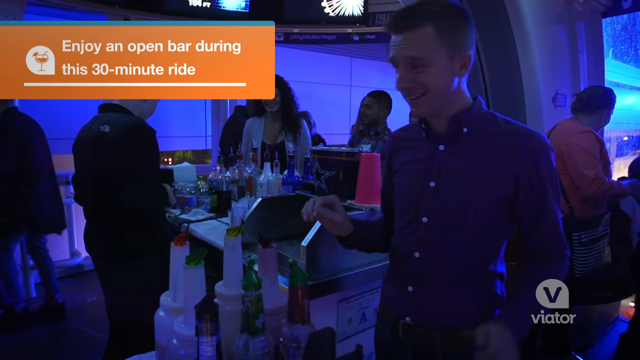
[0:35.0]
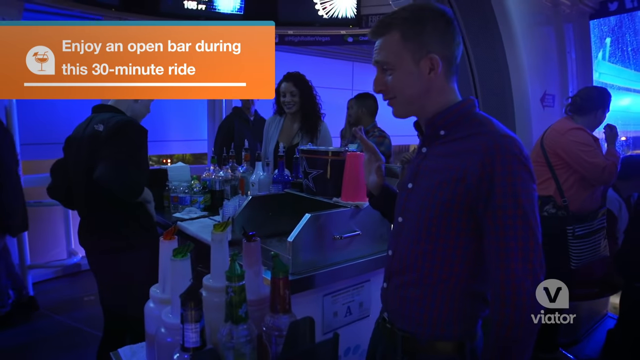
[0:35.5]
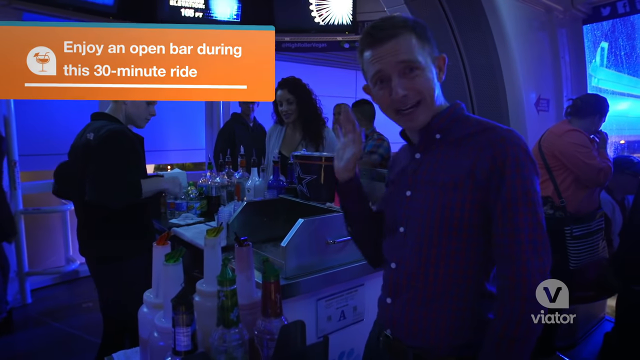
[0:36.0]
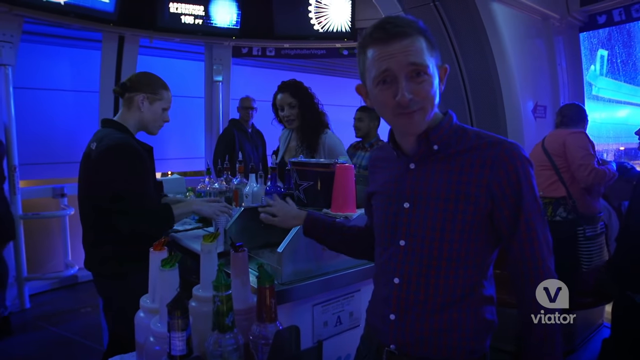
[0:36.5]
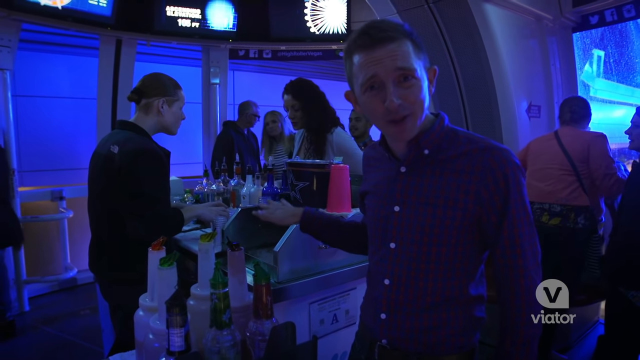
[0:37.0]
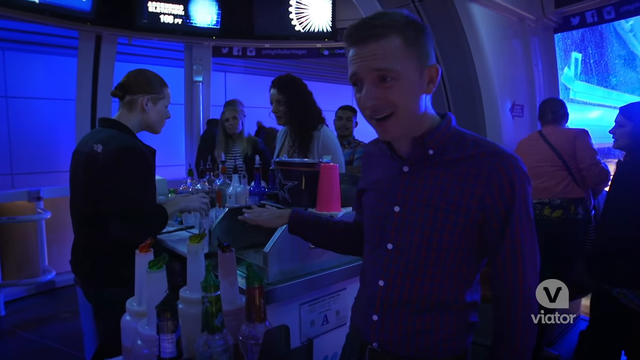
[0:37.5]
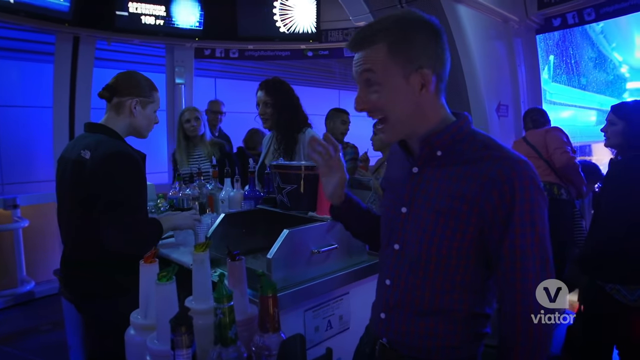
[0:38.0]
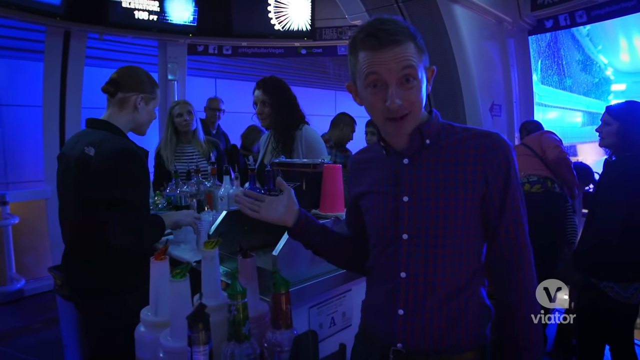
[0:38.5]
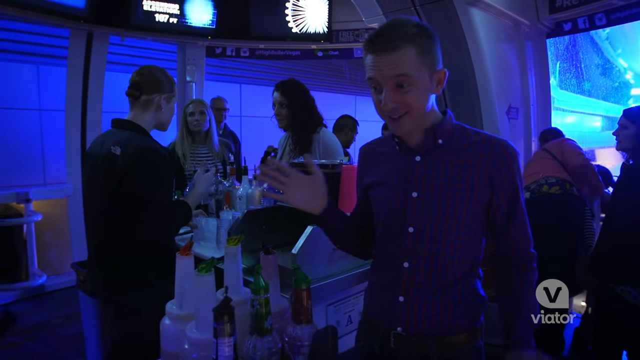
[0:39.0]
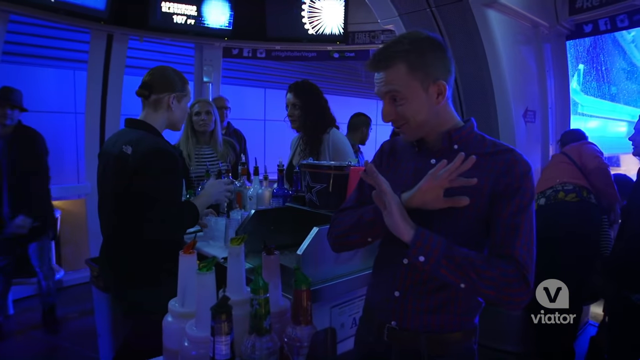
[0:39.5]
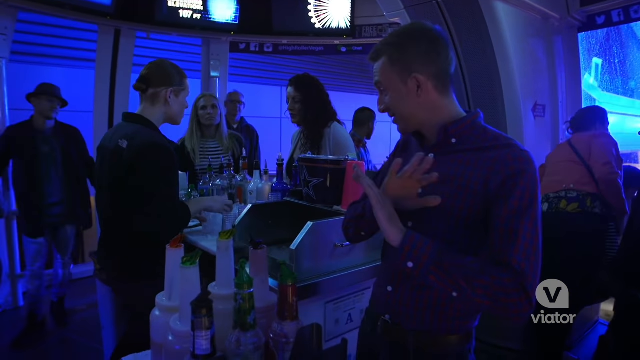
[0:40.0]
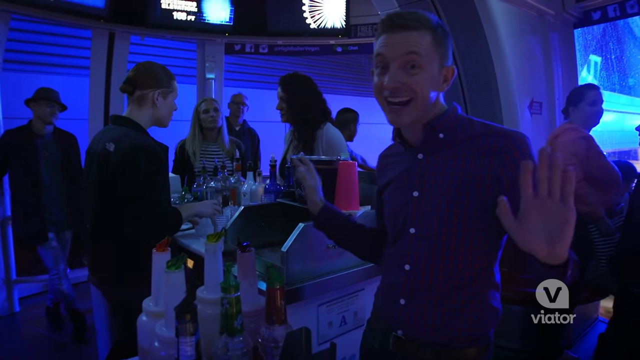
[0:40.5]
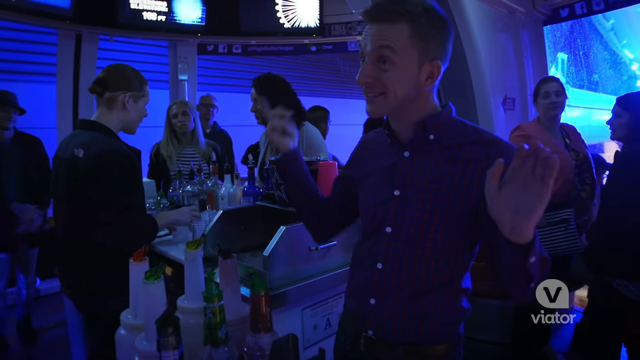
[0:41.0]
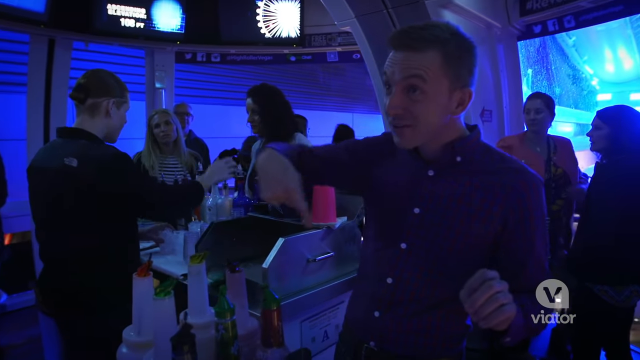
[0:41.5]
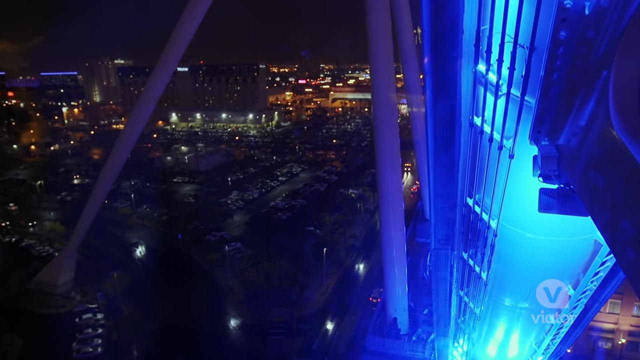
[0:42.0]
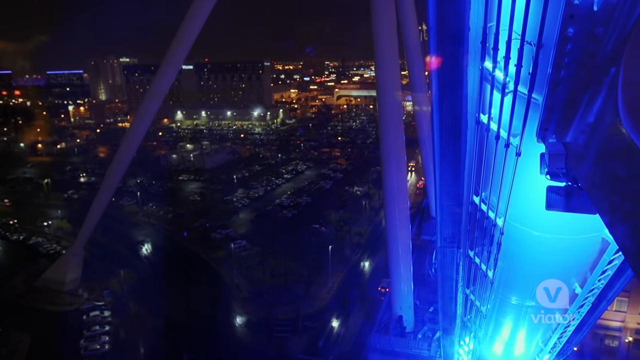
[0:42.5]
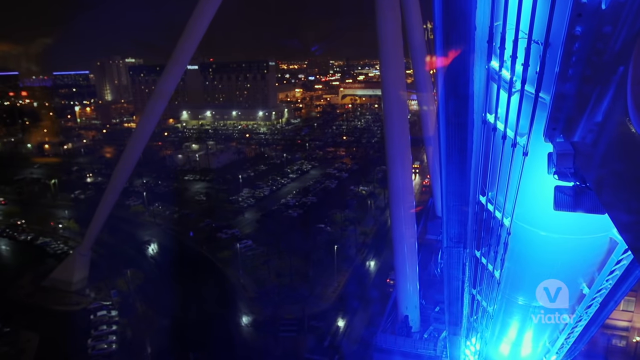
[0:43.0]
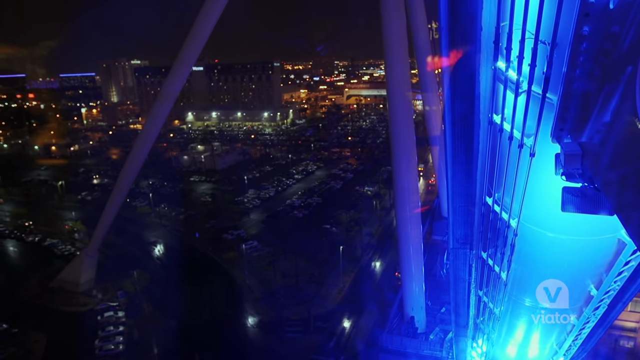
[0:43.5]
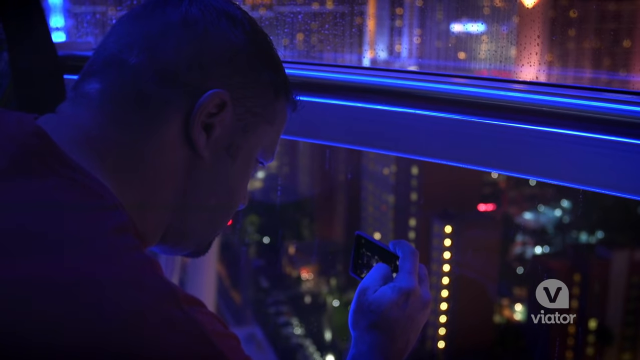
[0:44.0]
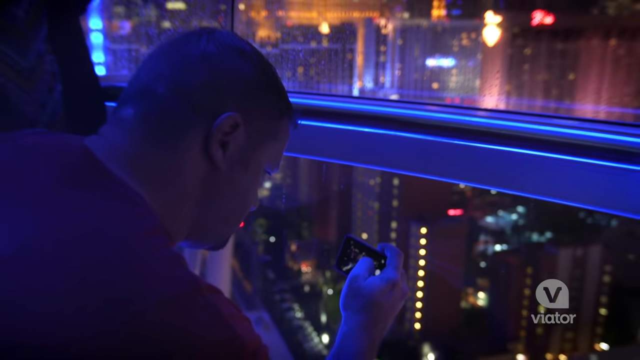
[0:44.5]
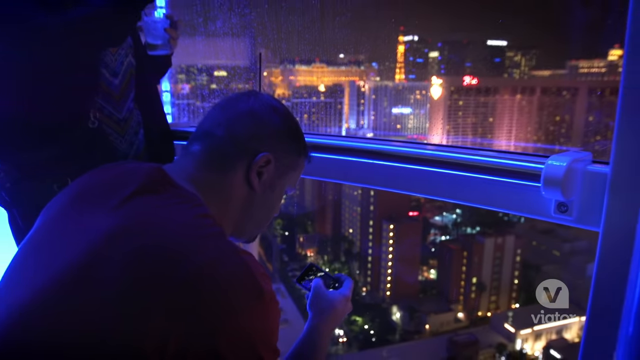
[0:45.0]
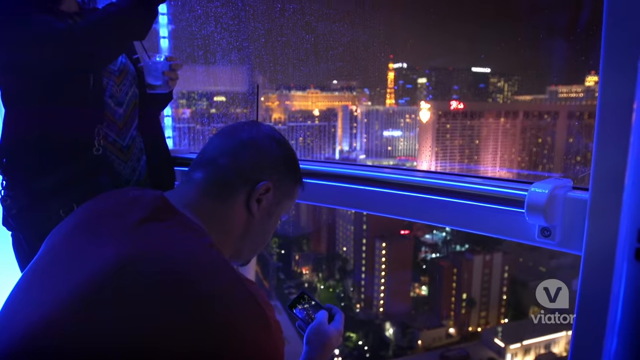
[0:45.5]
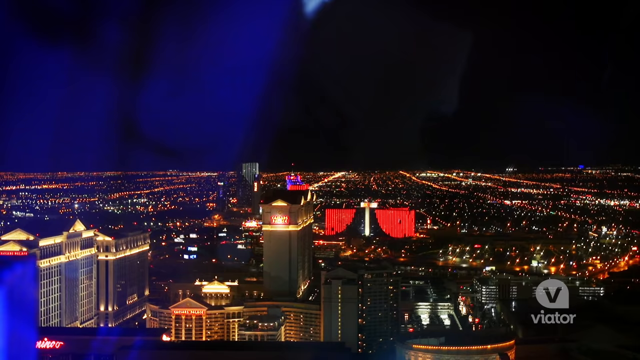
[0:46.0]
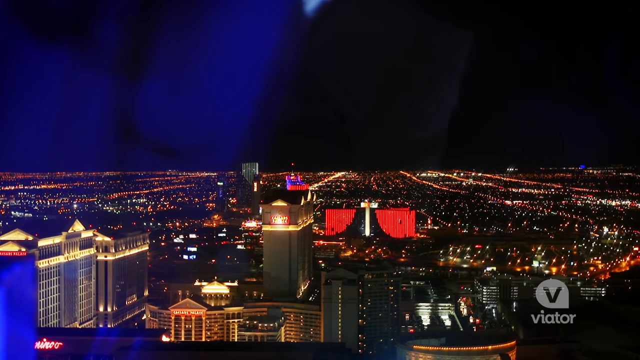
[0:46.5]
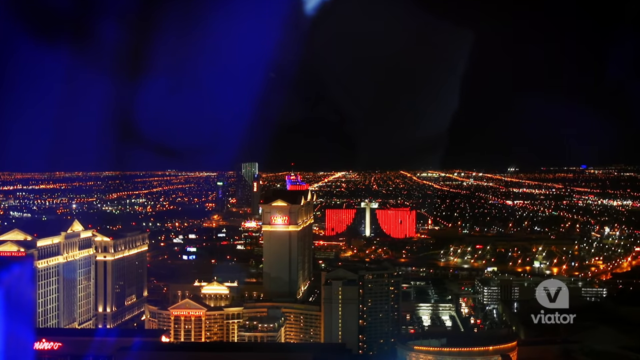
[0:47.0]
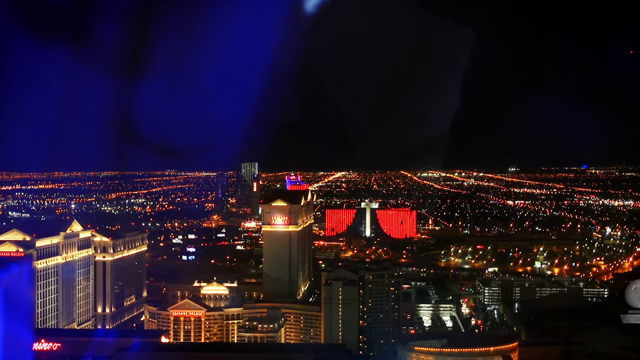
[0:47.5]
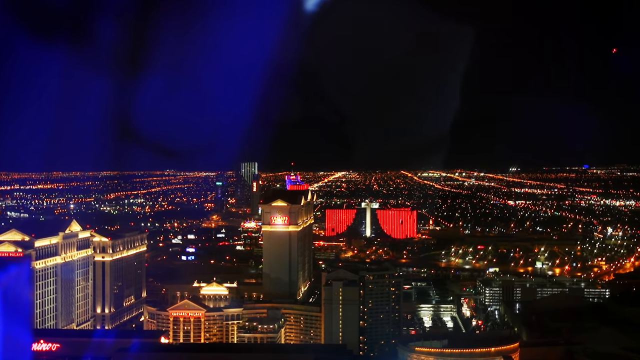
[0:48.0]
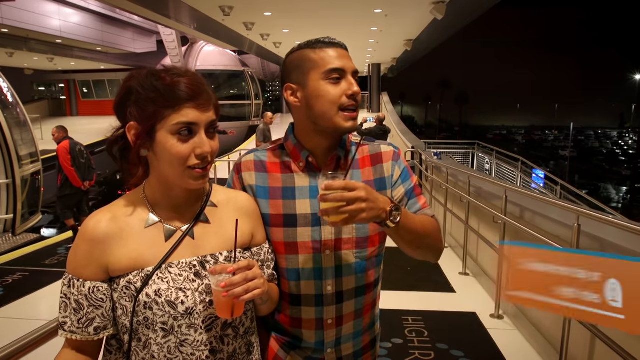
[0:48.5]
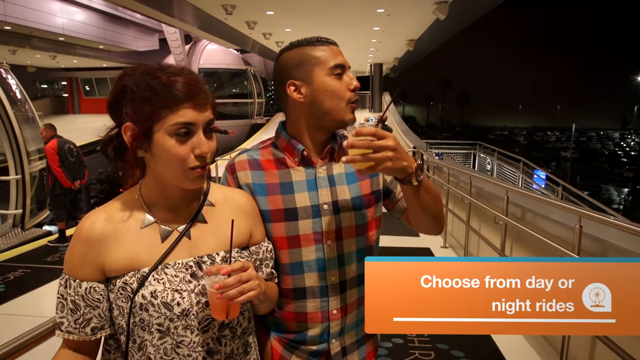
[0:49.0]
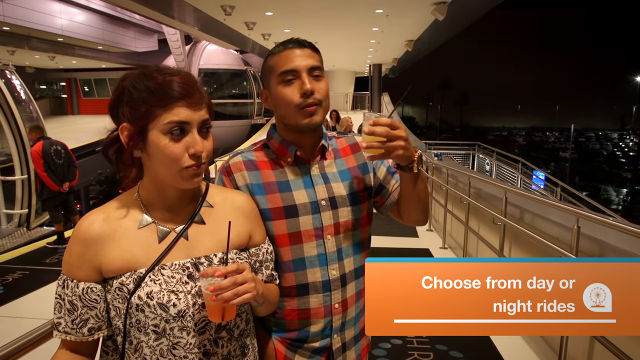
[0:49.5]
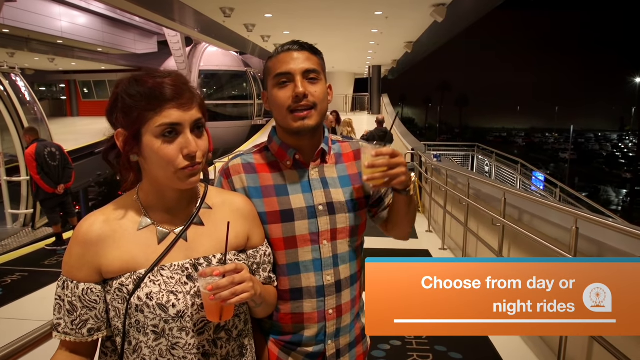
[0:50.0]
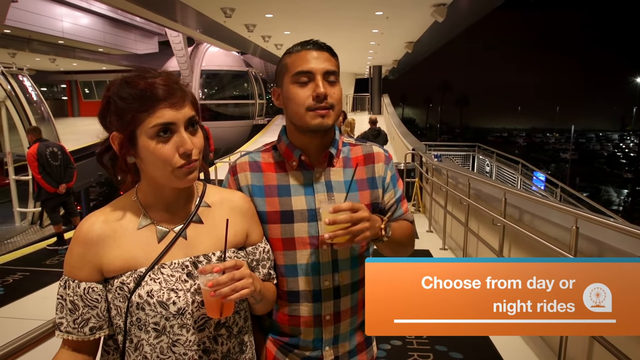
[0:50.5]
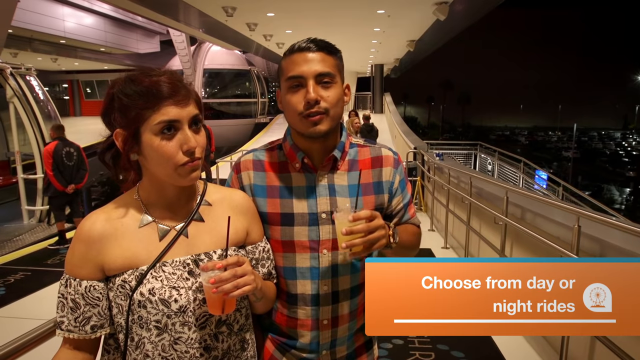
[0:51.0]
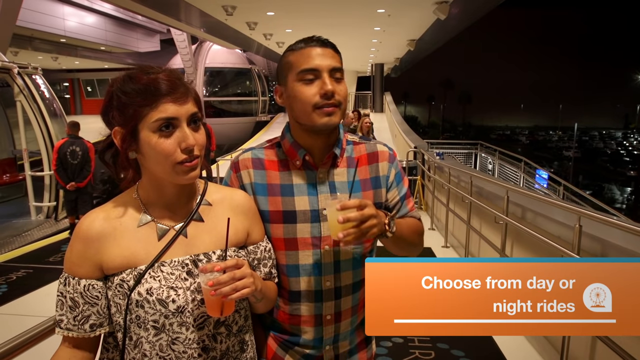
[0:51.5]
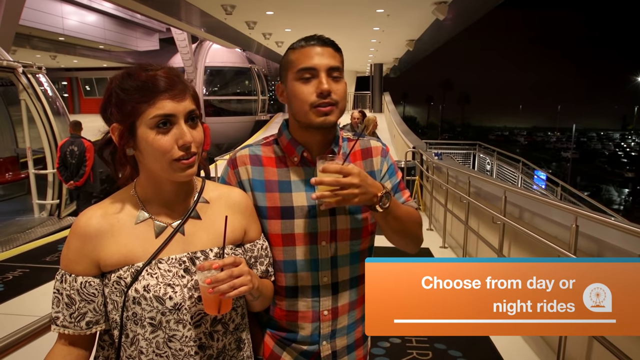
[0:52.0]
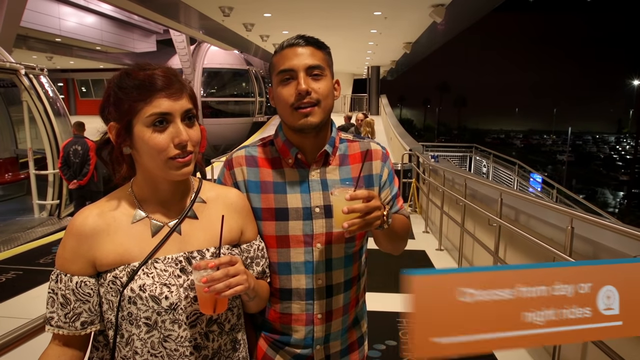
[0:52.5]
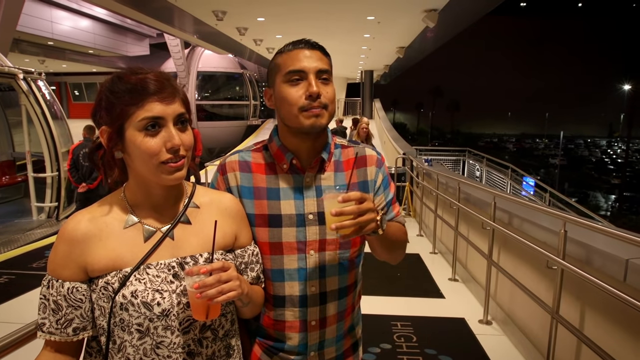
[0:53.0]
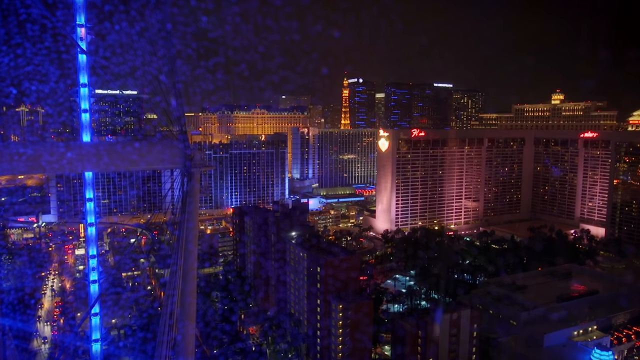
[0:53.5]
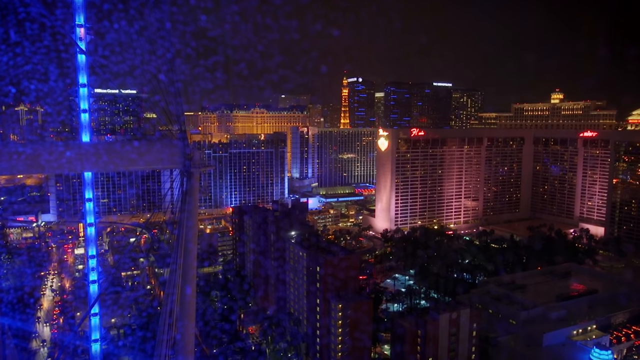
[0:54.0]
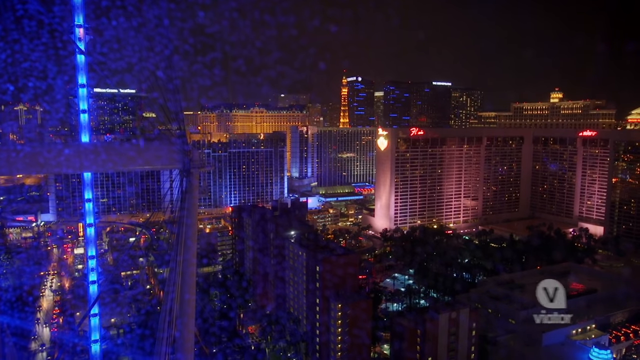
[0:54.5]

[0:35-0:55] The man in the gingham shirt gestures to the bartender behind him and to his right, where drinks are being mixed at a bar. People stand, order and take their drinks, and the man seems very happy, his gestures very wild. The base of the whole structure appears, lit up in blue light. The view then pans across the city: it is very black outside, but the city lights are neon and bright. A young man and a young woman, dressed up for the evening, each hold a drink in their left hand. He wears a checked shirt; her outfit has no sleeves on the shoulders but does extend to her arms. Behind them is what must be the high roller, the orb-like ride. Text on the right reads "Choose from day or night rides." The man drinks while talking to the camera.